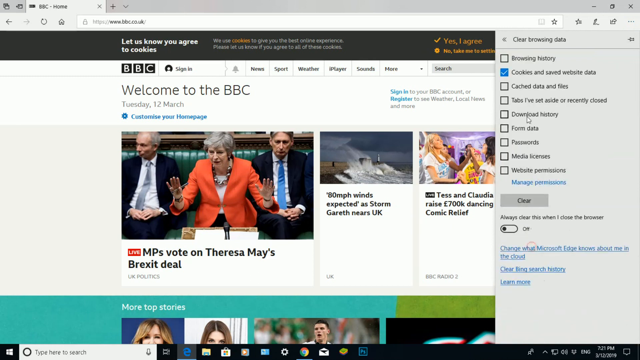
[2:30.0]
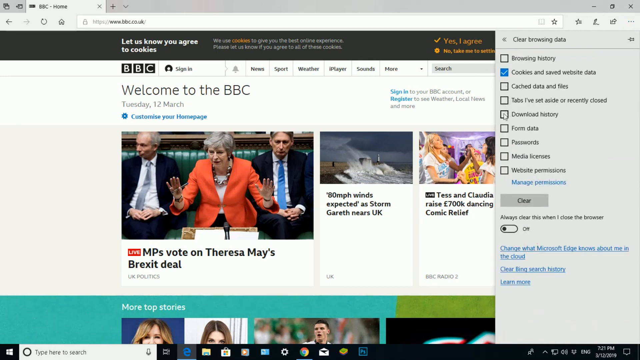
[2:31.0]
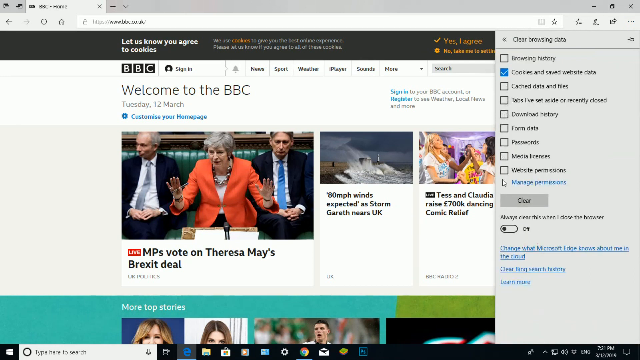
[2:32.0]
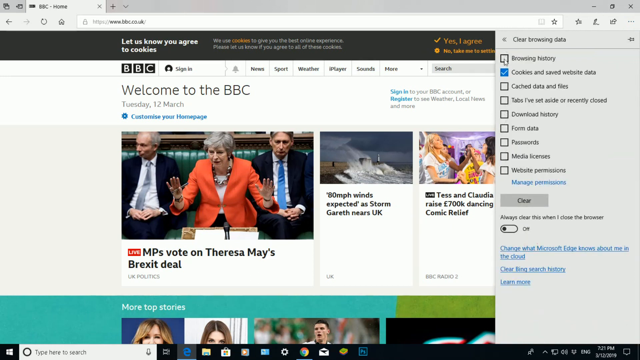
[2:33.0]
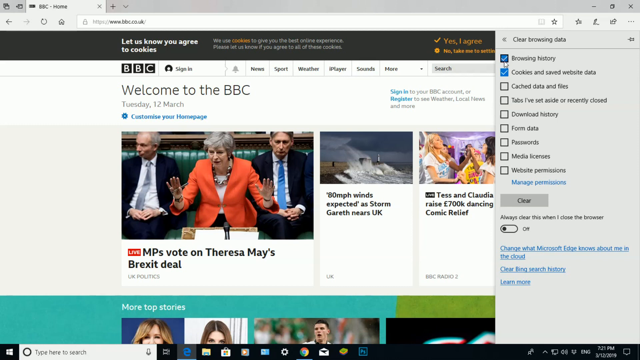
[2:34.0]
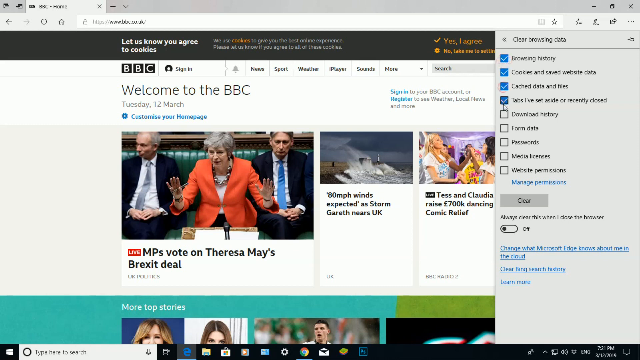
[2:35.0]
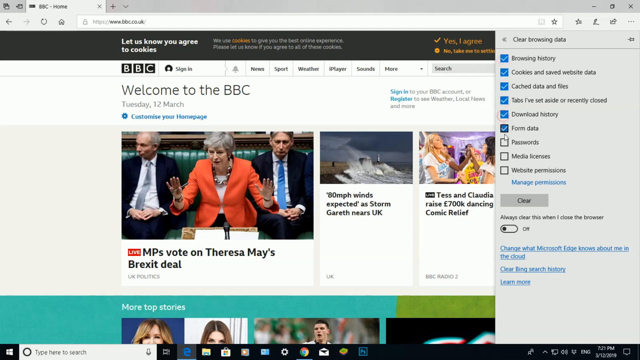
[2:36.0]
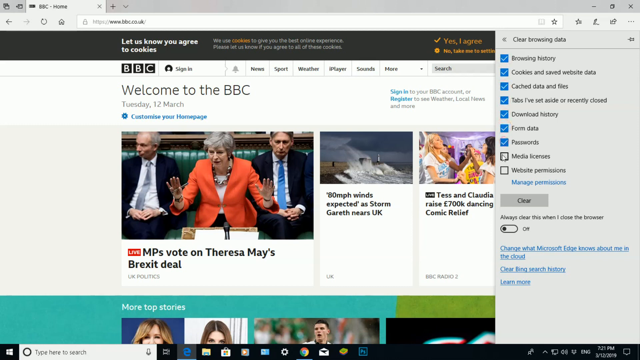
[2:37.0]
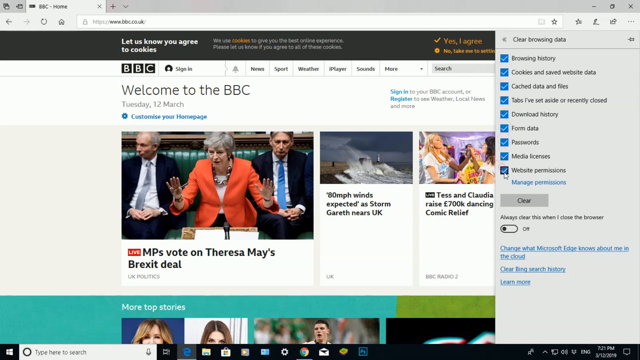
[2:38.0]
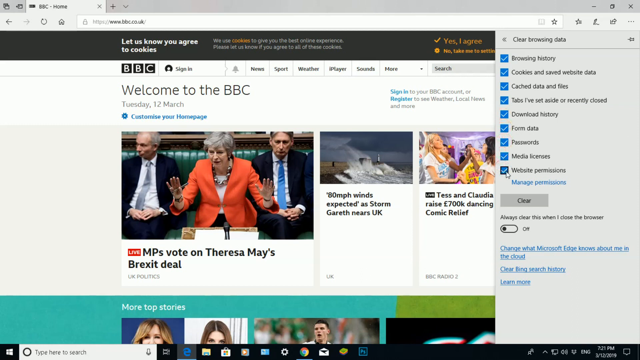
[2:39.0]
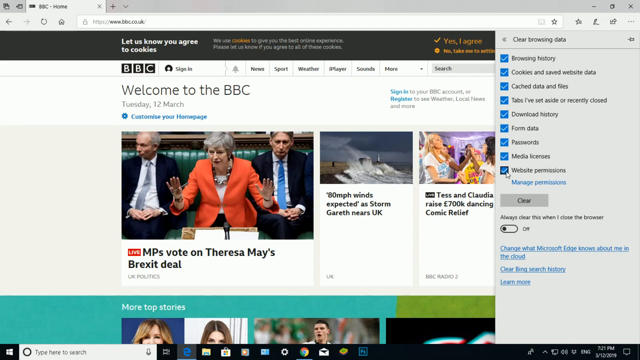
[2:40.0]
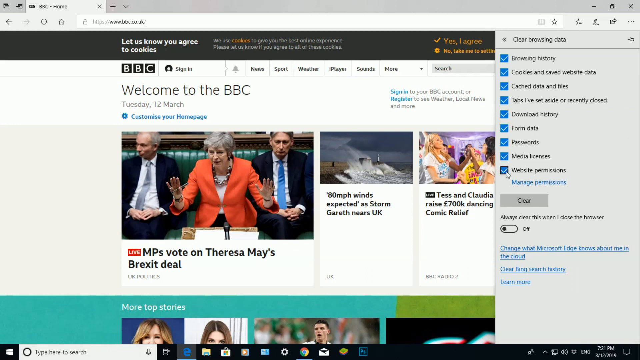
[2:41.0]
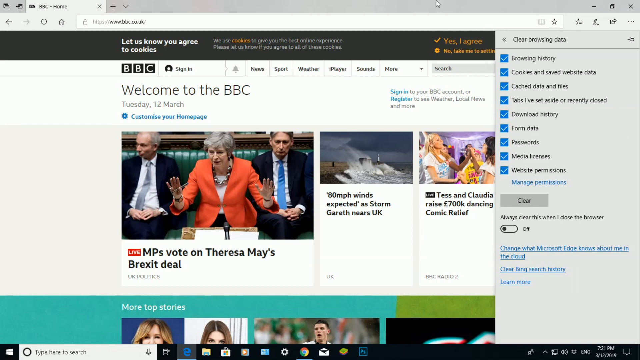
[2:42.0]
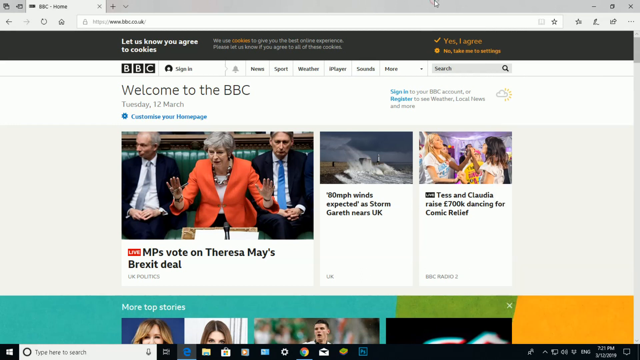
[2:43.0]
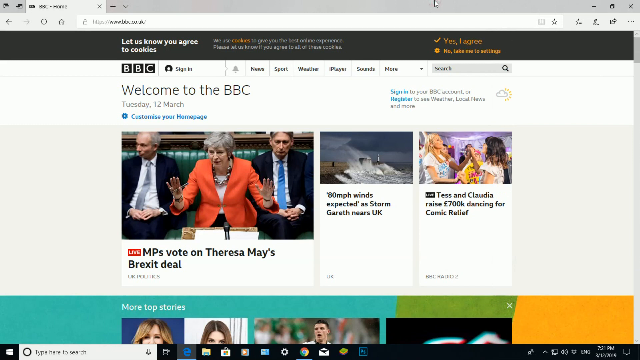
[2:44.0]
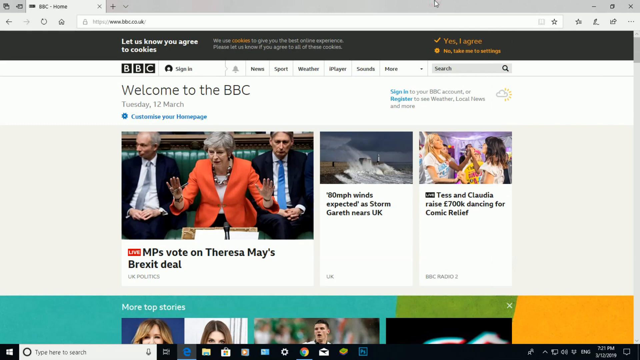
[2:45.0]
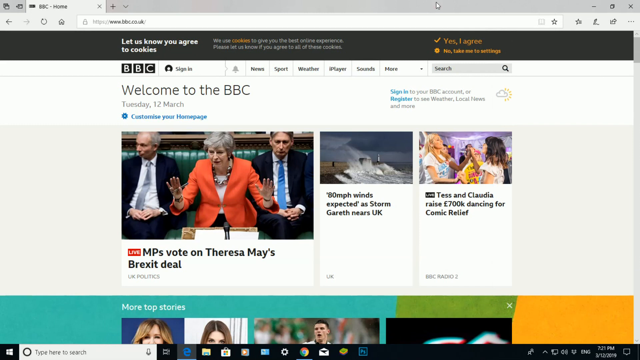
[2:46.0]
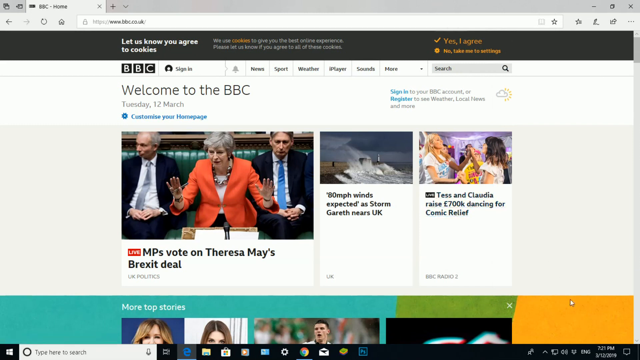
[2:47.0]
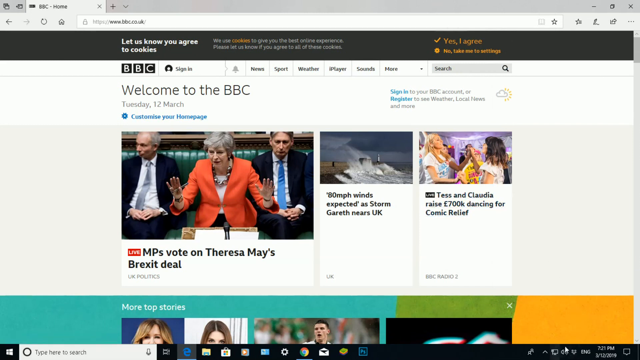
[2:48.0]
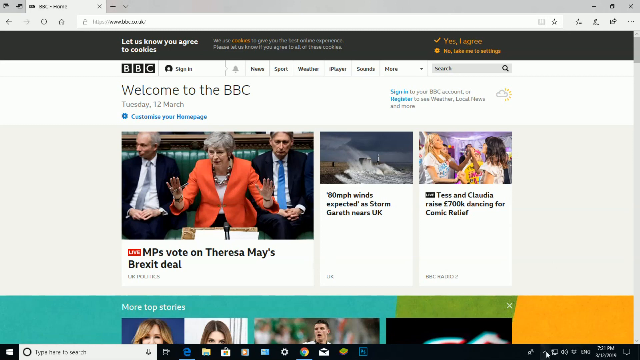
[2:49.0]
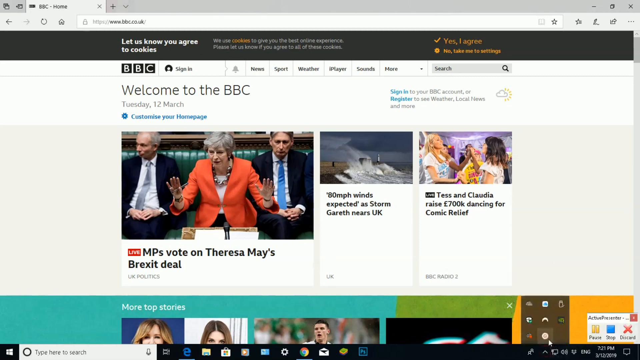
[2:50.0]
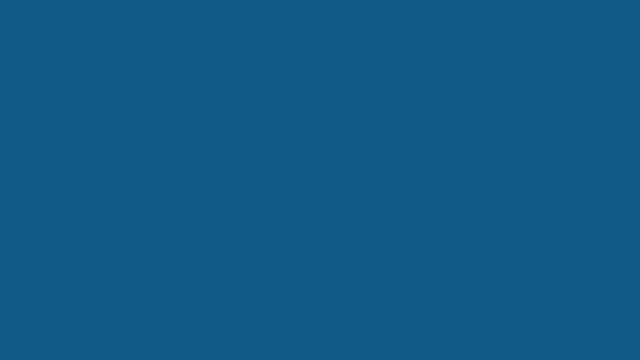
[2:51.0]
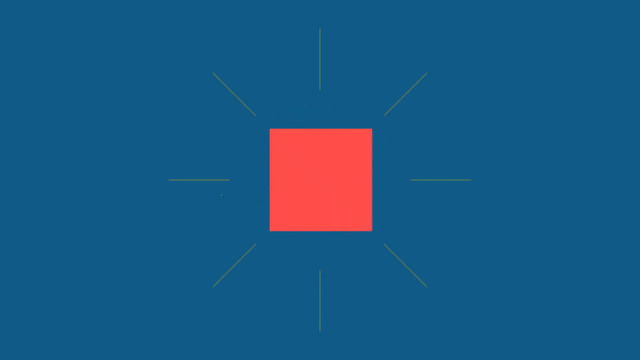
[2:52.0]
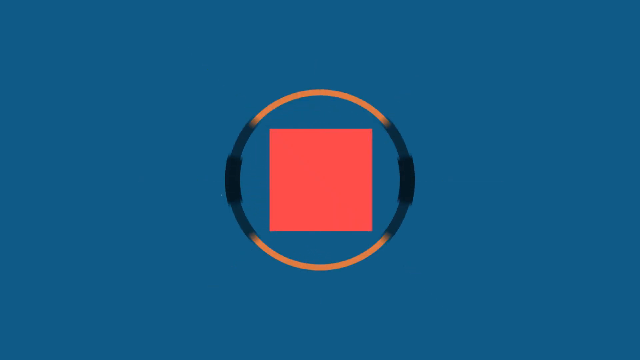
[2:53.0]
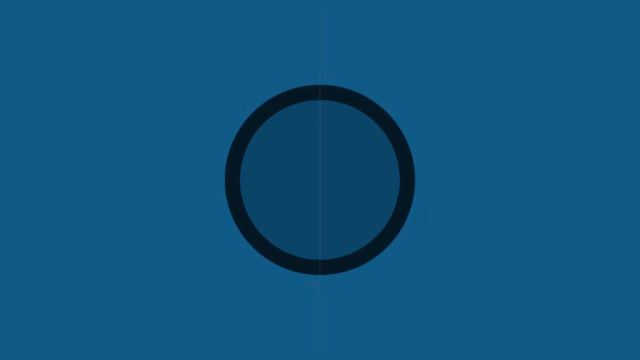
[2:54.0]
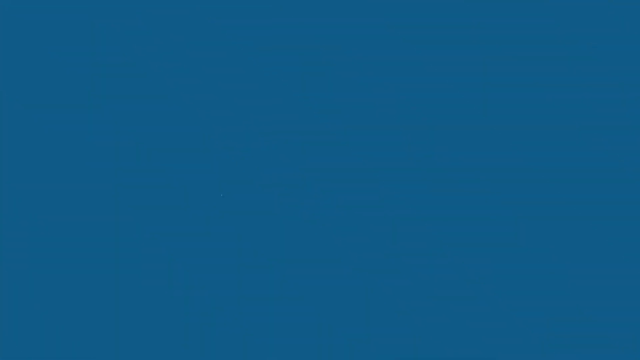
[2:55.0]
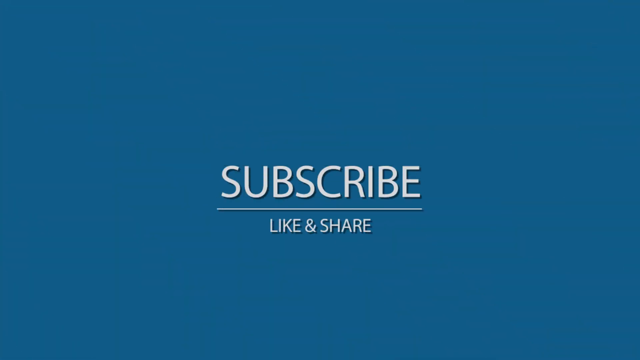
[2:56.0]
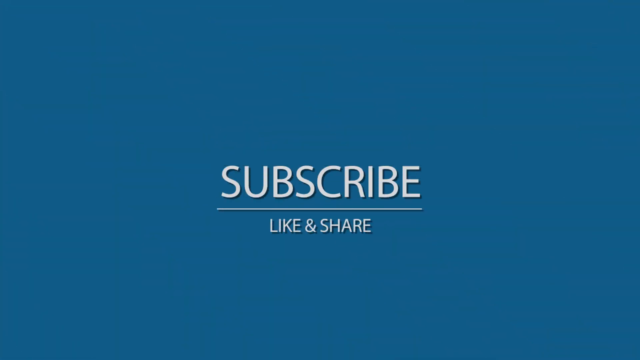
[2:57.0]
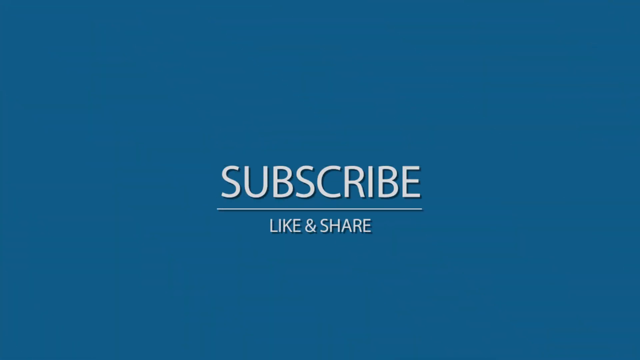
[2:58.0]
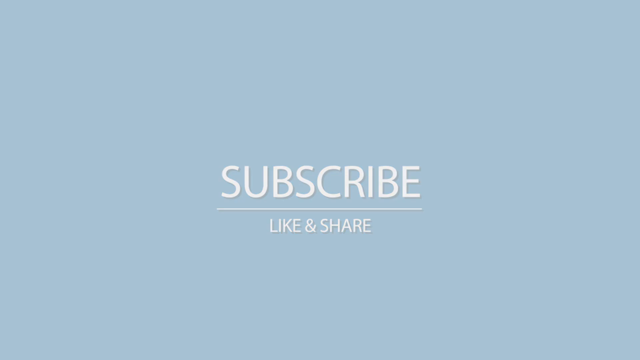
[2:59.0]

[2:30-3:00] The browser on the Mac system shows the bbc.co.uk website, a news site with major stories in a grid layout. The user clicks the settings button in the top right and hovers the mouse over some options. He checks the browsing data options from top to bottom until all nine are checked, shown as blue boxes with white check marks. He clicks away from the settings and moves the cursor to the top of the browser, staying on the BBC website until it is zoomed out completely. The video then transitions to a page showing a logo and various transition phases in colors such as blue, red and green, and ends with the text "subscribe, like, and share".